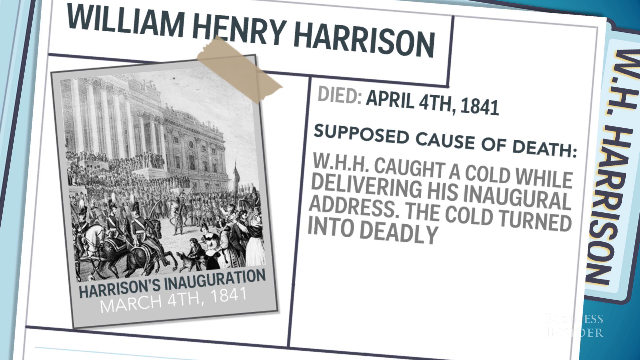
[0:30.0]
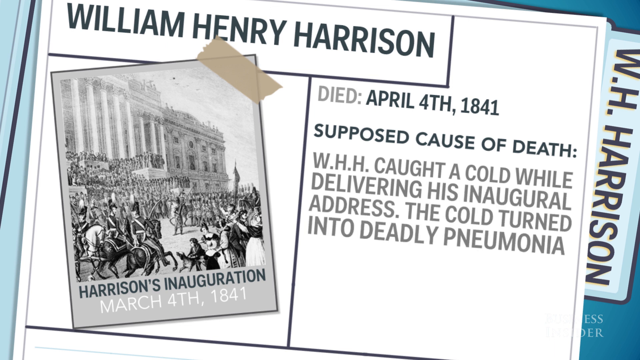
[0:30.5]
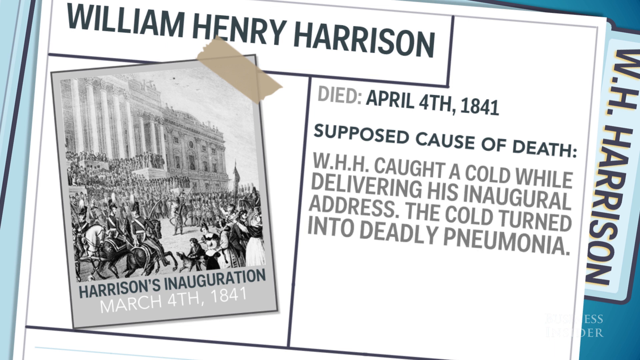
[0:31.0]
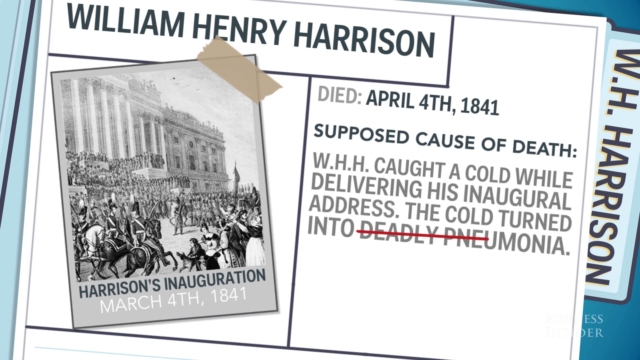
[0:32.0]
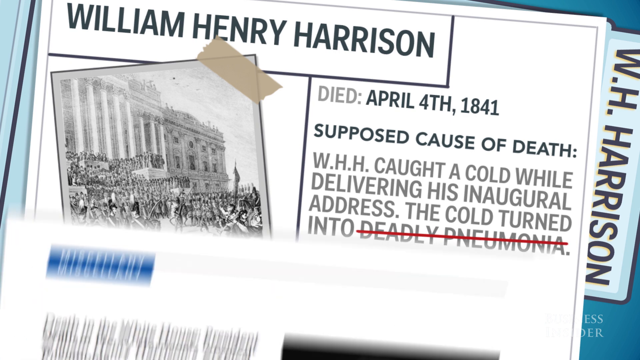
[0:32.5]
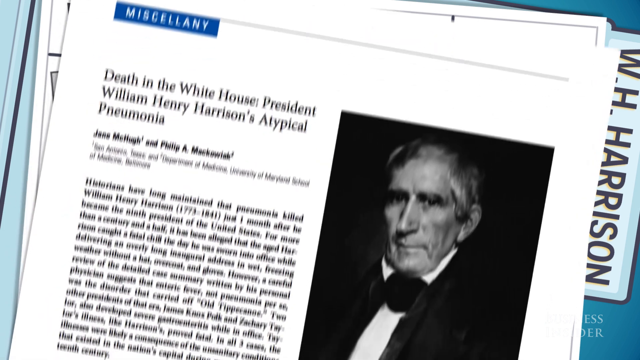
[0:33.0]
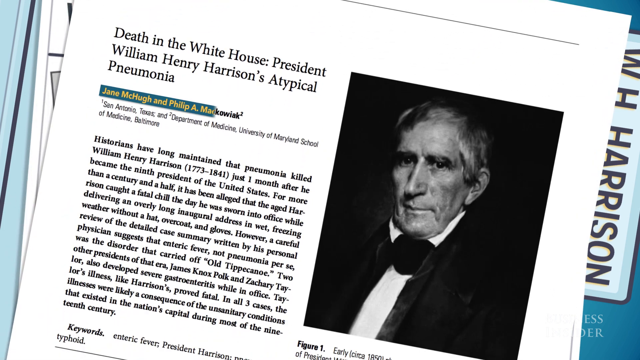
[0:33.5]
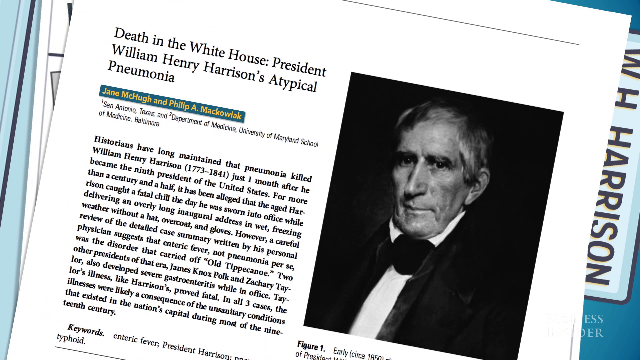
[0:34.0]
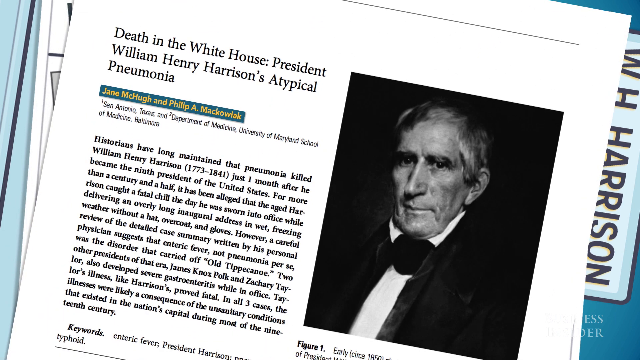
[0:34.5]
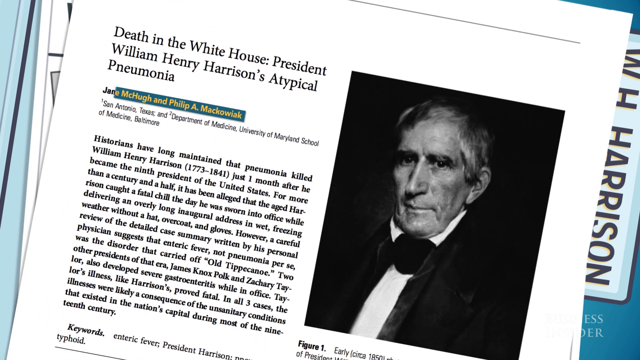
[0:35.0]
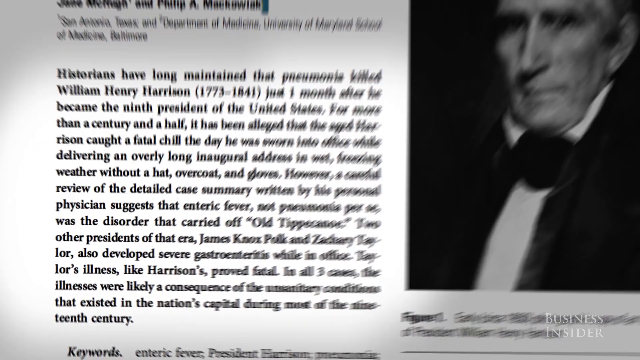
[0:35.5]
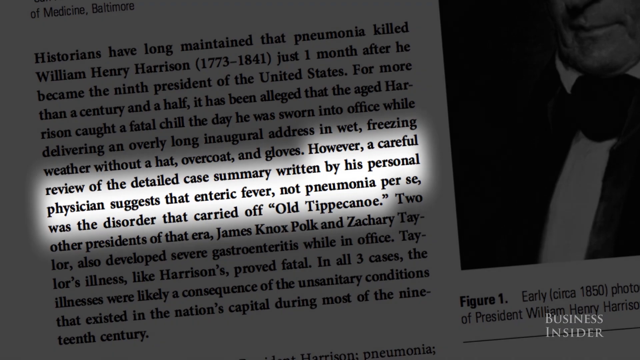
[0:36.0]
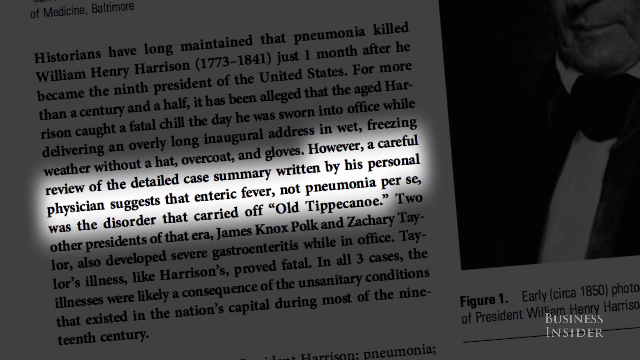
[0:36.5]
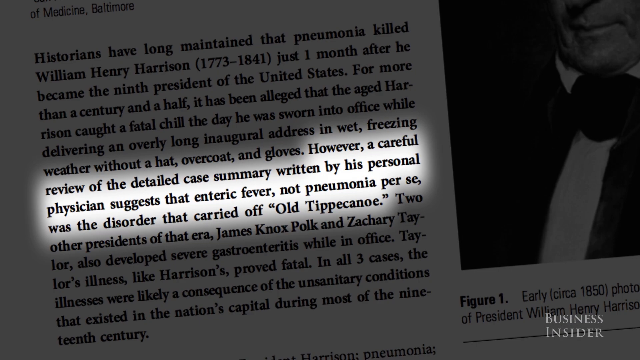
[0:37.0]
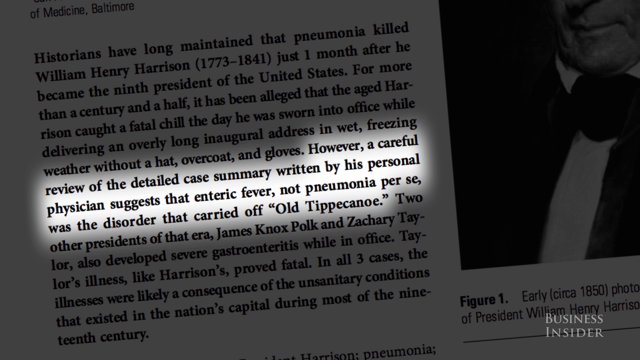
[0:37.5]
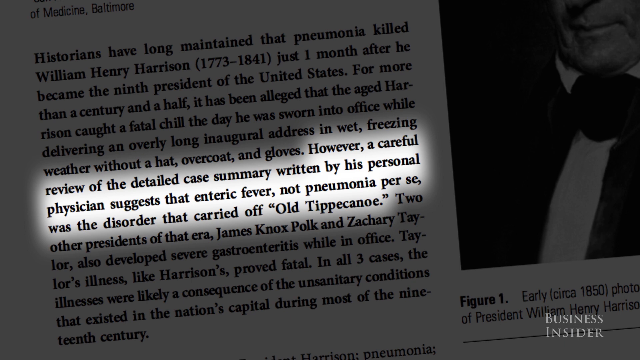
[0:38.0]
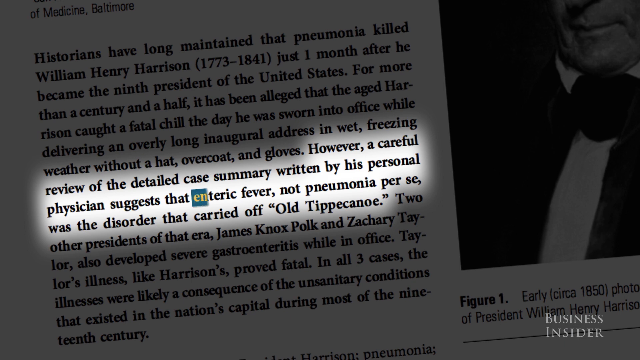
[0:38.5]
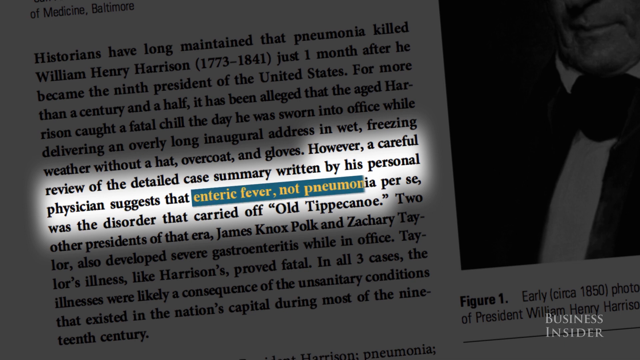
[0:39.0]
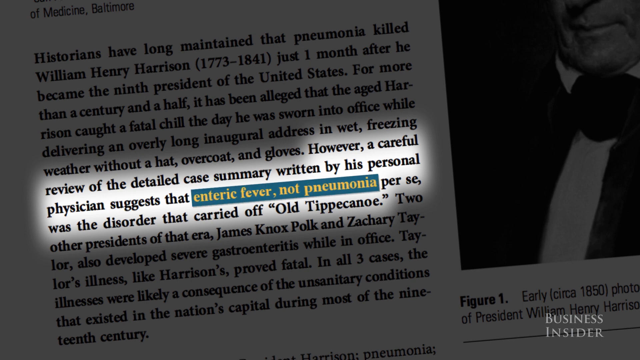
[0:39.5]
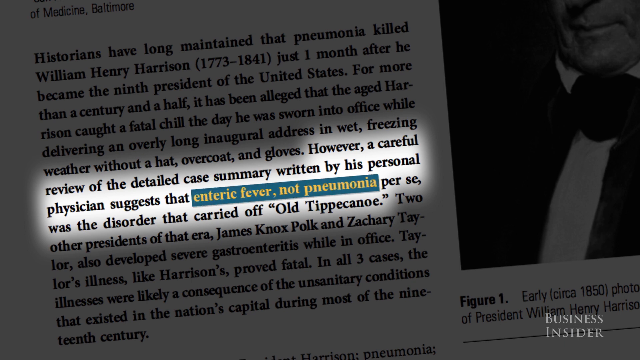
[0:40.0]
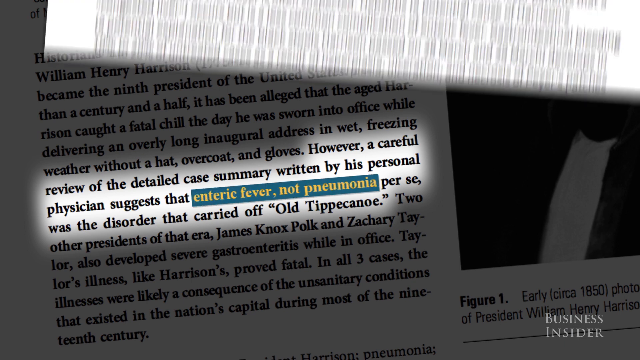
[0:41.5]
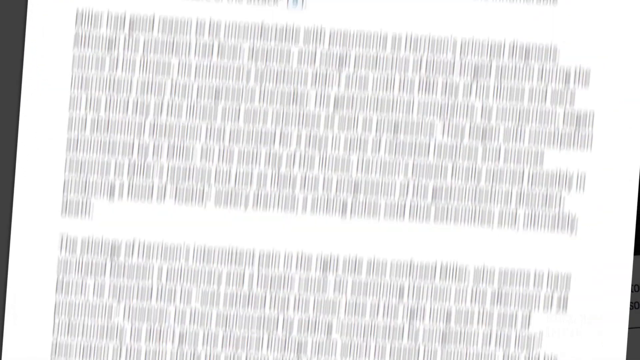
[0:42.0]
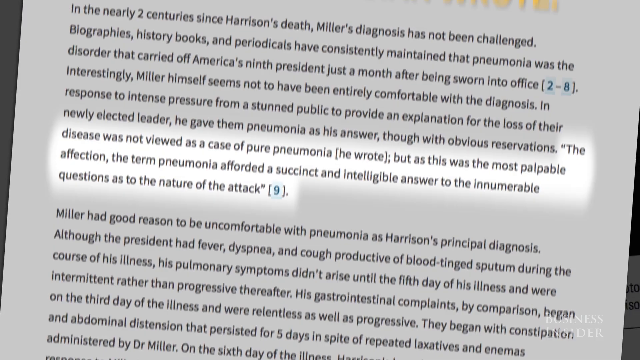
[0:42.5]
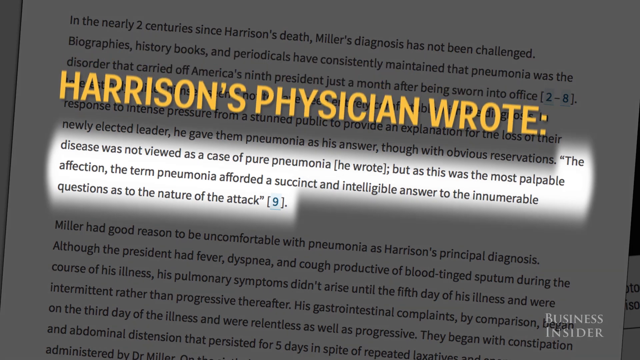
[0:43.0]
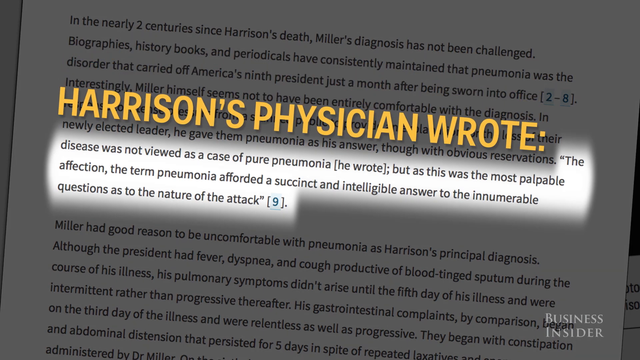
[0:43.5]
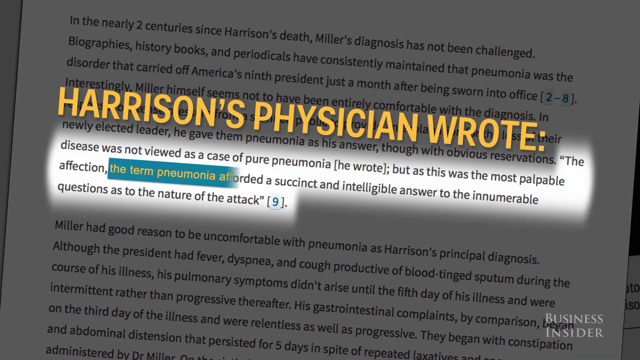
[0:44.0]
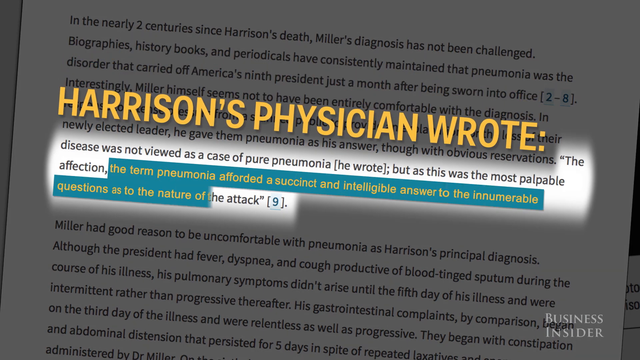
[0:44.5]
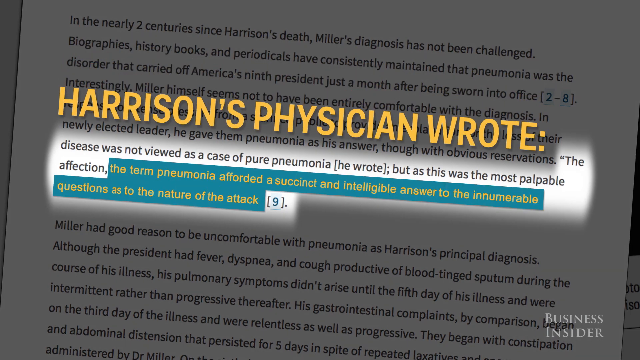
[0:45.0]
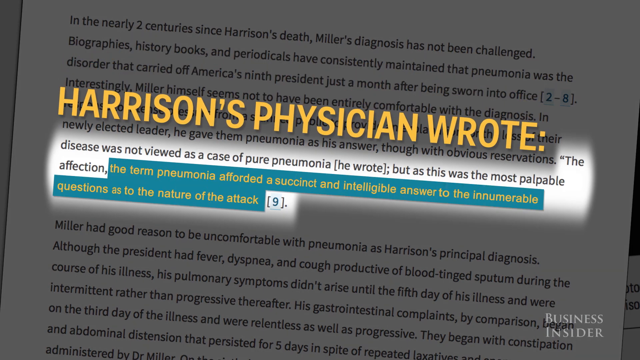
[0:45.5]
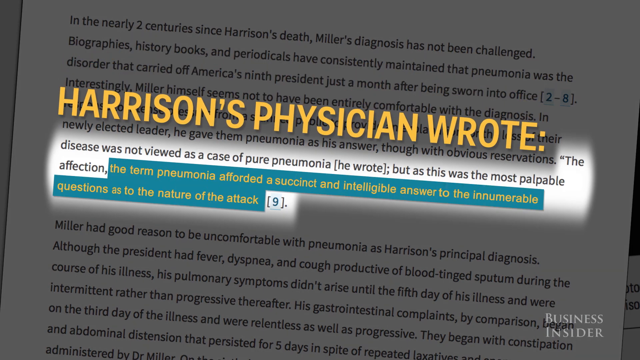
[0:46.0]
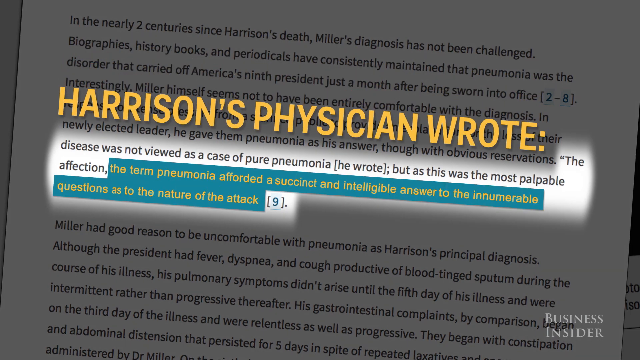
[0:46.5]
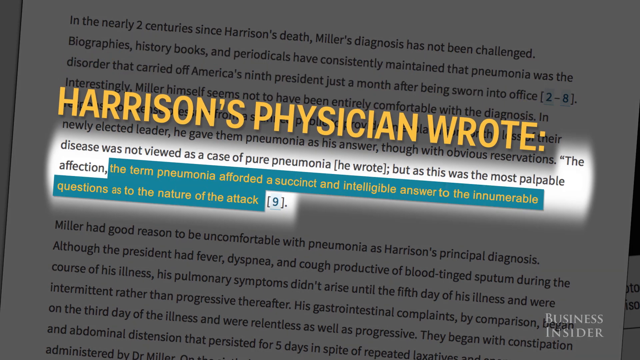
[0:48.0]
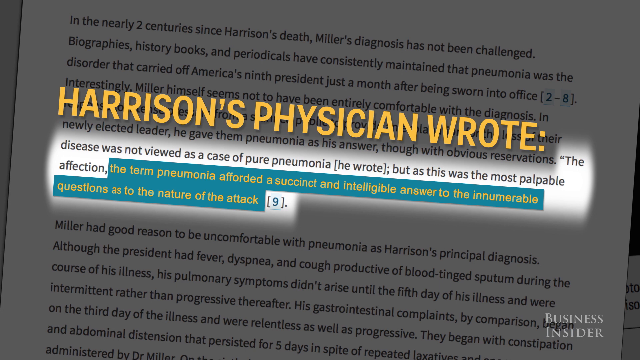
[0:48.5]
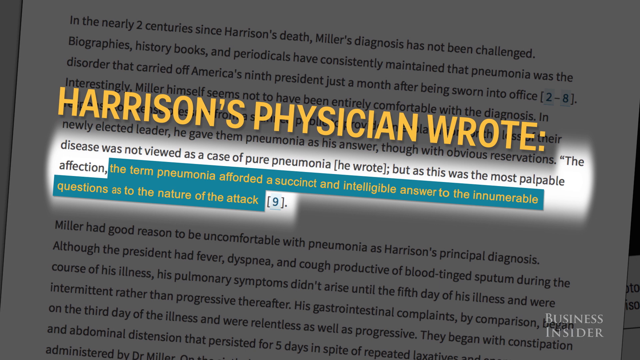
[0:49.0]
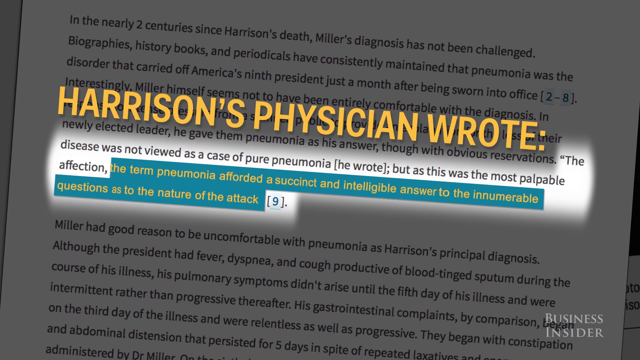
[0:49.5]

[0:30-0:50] The part about William Henry Harrison's supposed cause of death is on screen: he caught a cold while delivering his inaugural address, and the cold turned into deadly pneumonia. A red line is then put through "deadly pneumonia." Next is what looks like an old newspaper article with a black and white photo of William Henry Harrison on the right-hand side. The headline reads "Death in the White House, President William Henry Harrison's atypical pneumonia," and the article goes into the details of his case. The video zooms into a paragraph saying he may have died from enteric fever and not pneumonia. The next shot shows a highlighted area of what Harrison's physician wrote, also about the pneumonia implication.